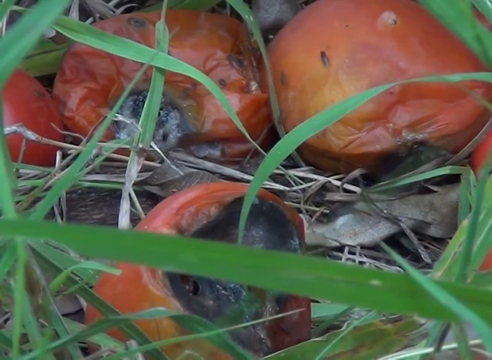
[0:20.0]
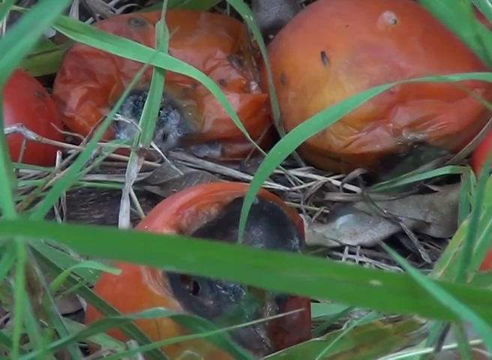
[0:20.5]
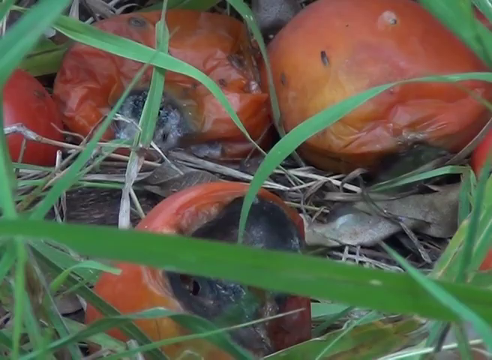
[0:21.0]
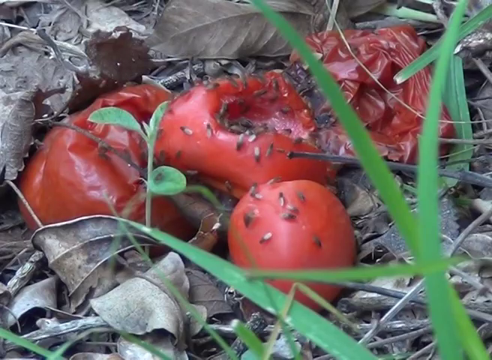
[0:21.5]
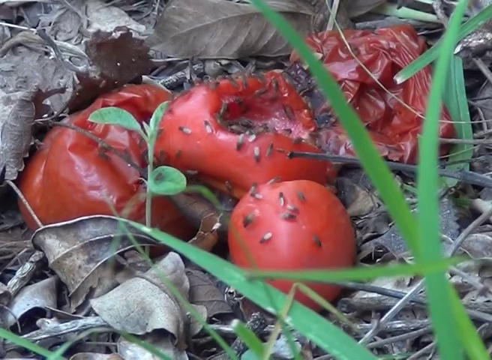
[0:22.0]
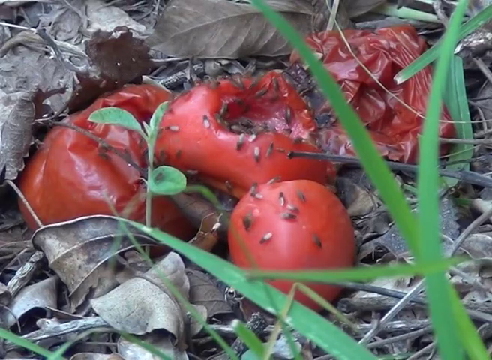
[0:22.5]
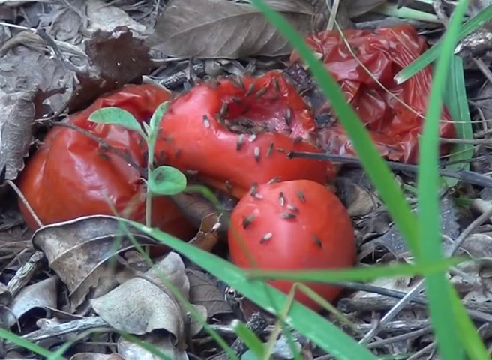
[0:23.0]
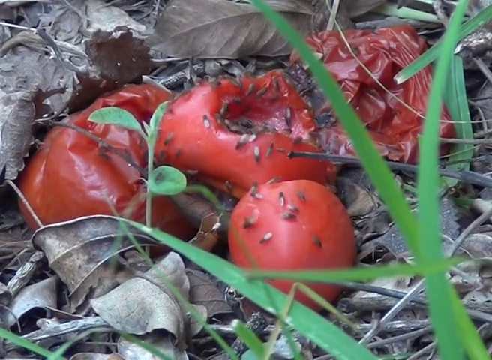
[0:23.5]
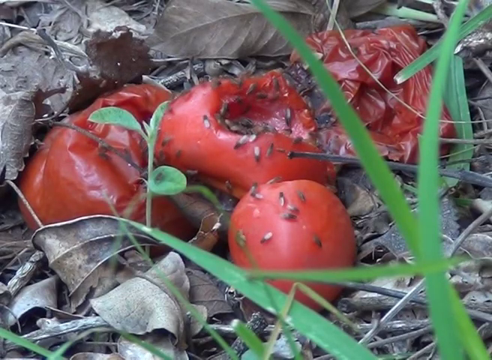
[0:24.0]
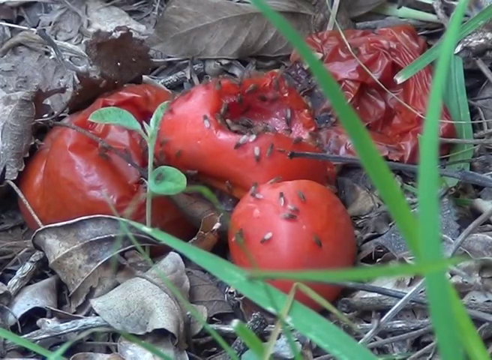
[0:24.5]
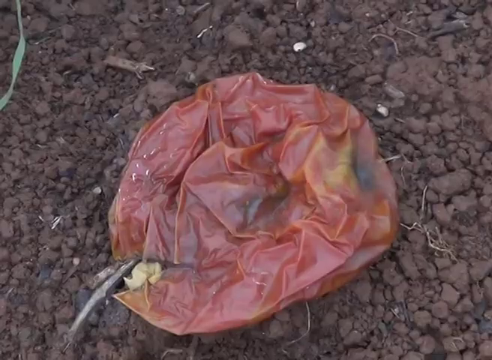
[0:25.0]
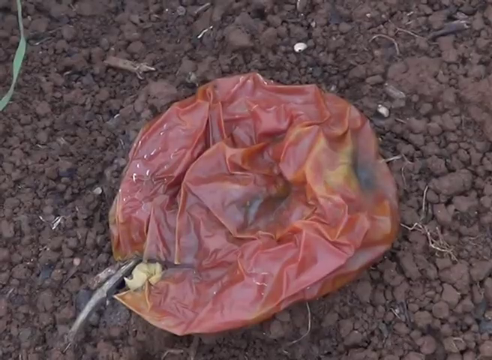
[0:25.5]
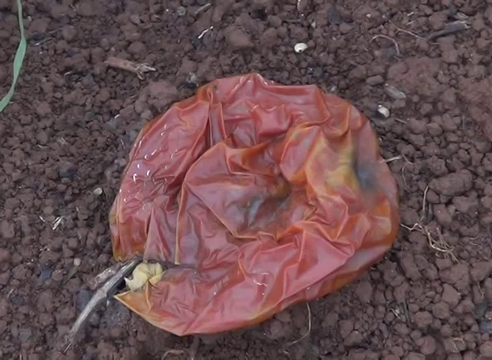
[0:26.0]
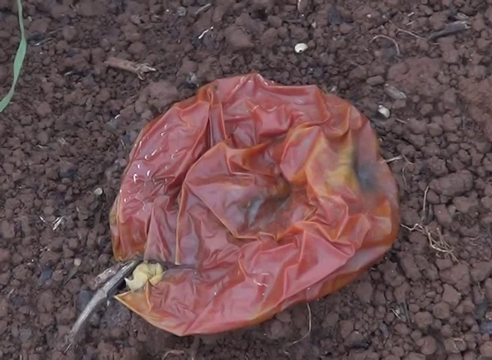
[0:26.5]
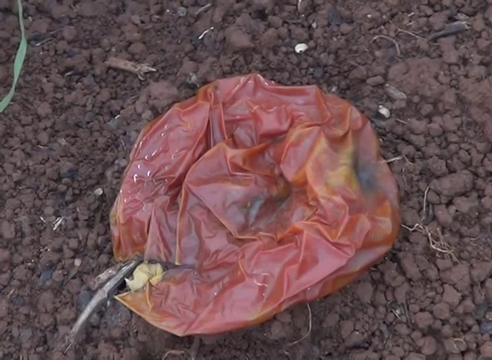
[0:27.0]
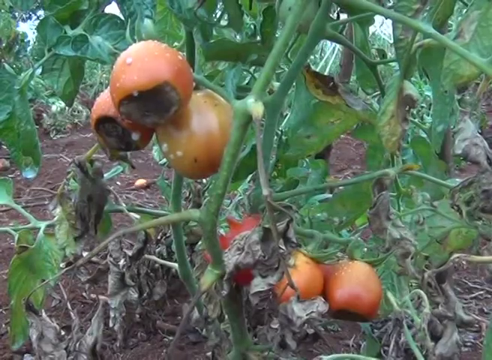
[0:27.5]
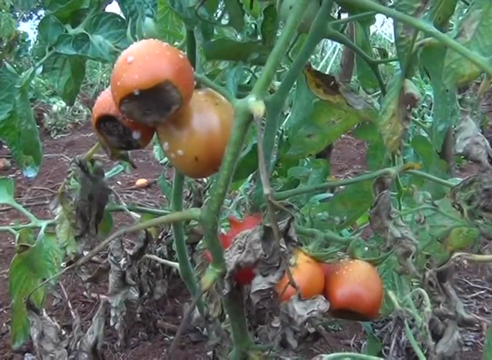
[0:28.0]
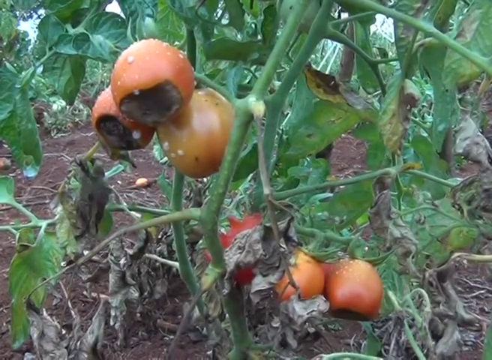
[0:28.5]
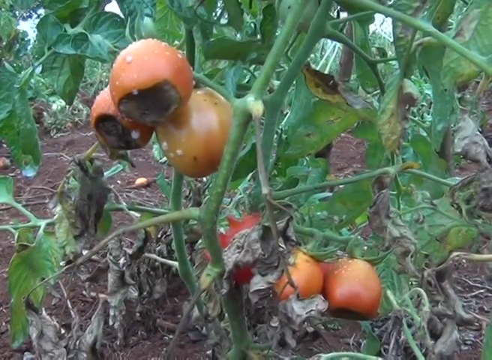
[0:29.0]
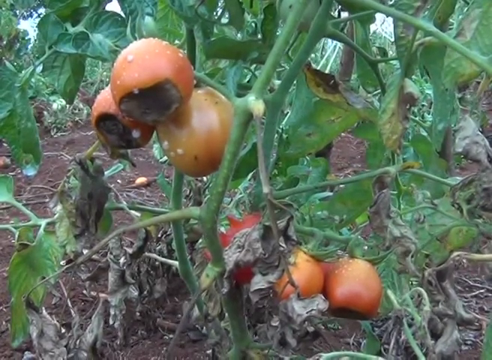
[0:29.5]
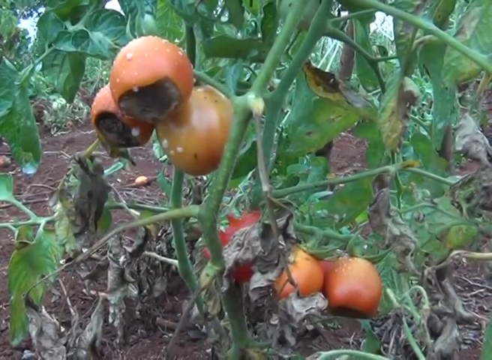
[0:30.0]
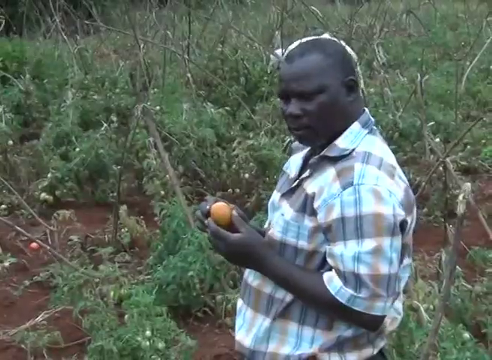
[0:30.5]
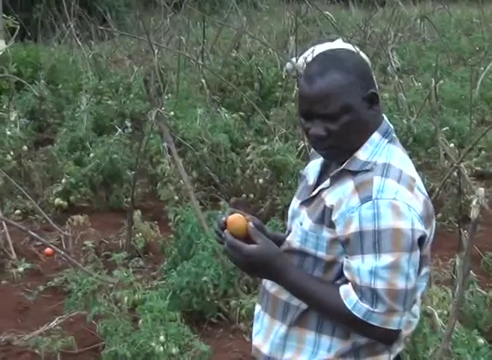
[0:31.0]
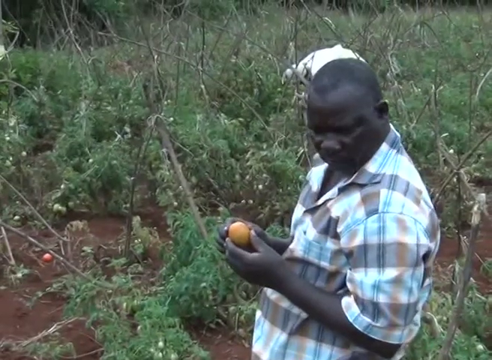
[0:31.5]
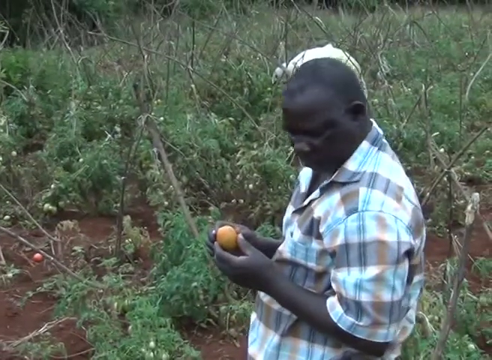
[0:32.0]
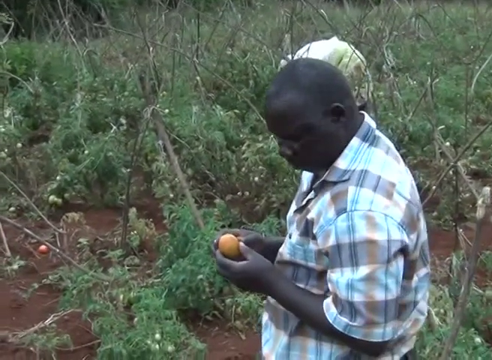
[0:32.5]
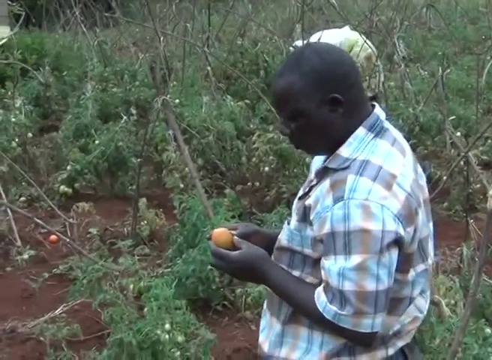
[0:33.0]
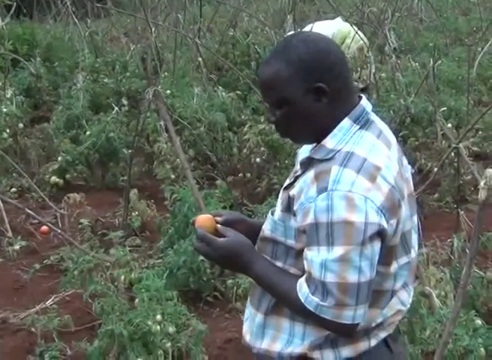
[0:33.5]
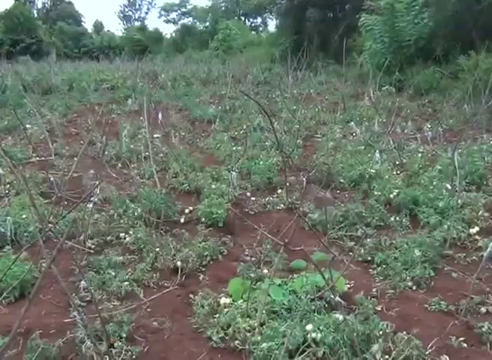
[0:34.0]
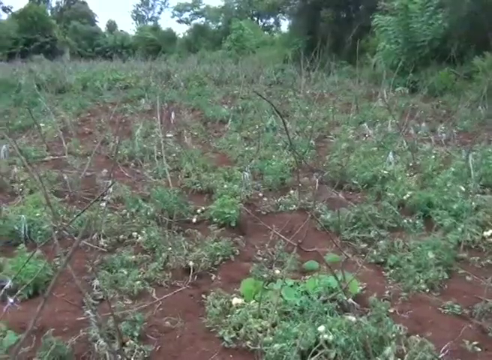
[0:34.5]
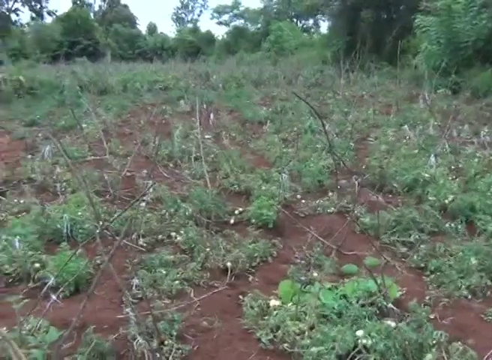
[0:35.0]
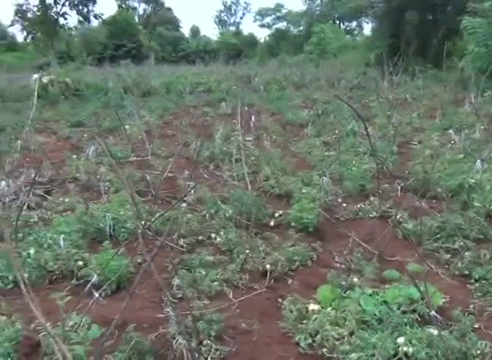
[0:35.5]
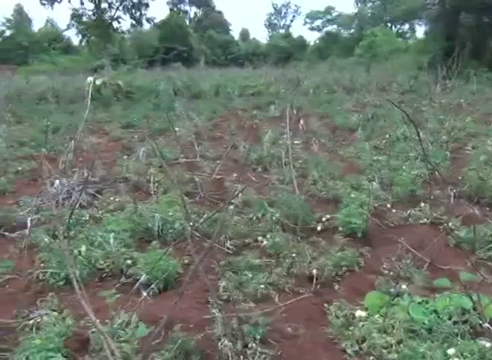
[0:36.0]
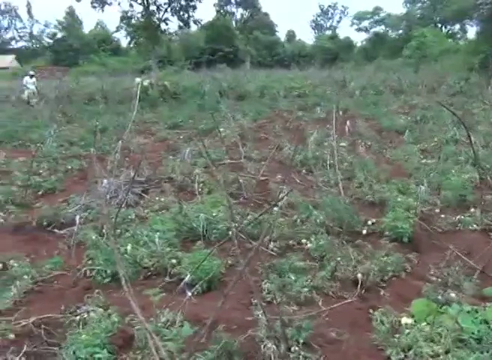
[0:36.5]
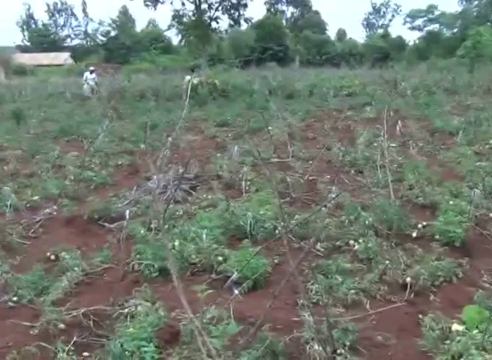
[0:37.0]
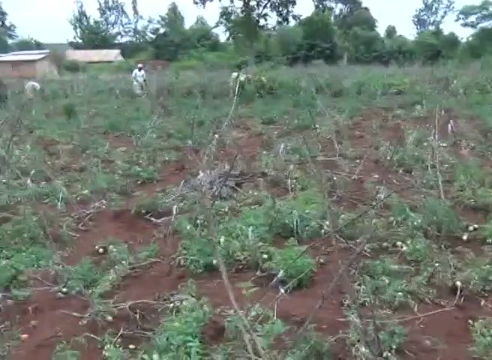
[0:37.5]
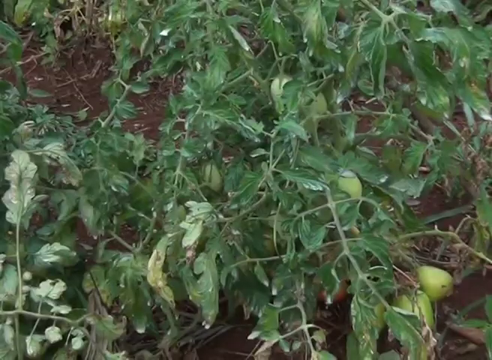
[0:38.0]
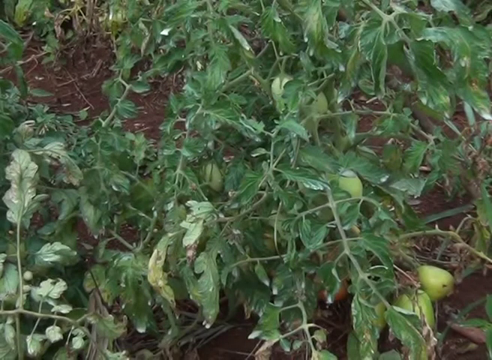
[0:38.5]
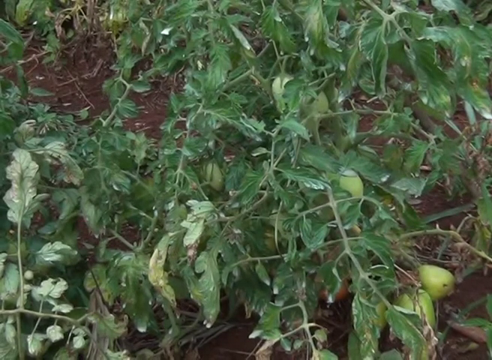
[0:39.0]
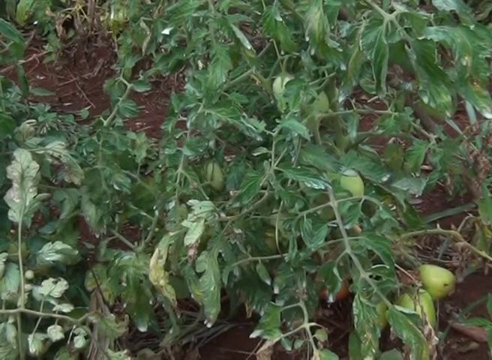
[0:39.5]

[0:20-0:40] Tomatoes lie on the floor, looking like they are rotting, with fruit flies on them and blades of green grass in the foreground. The video cuts to more tomatoes that also look rotten, with even more fruit flies walking around. Another tomato seems to have completely rotted, its wrinkled skin clearly visible; it seems to be on the ground, which is covered in dirt. A vine holds red tomatoes that are rotting, with parts of them turned black. The video then cuts to a man wearing a tight shirt, holding with both hands a tomato that looks kind of orange. Next, a field full of tomatoes appears, followed by a part of the field with tomato plants where green tomatoes hang from the vines.